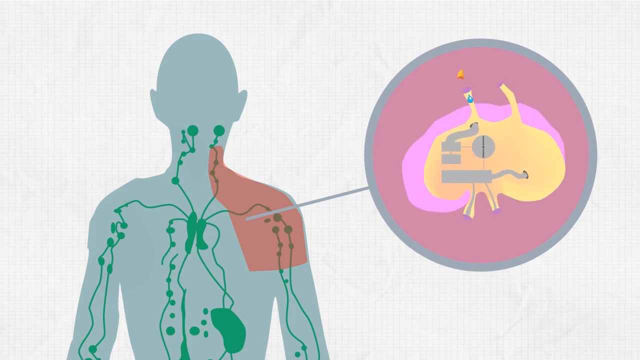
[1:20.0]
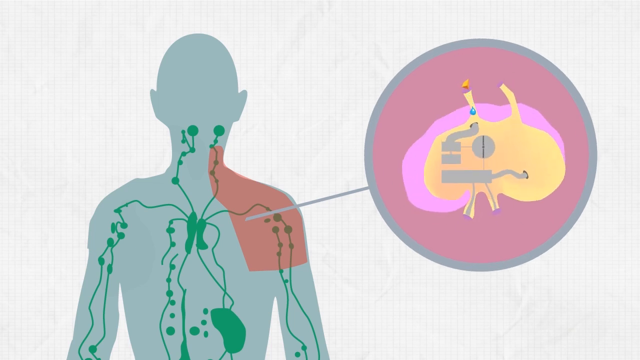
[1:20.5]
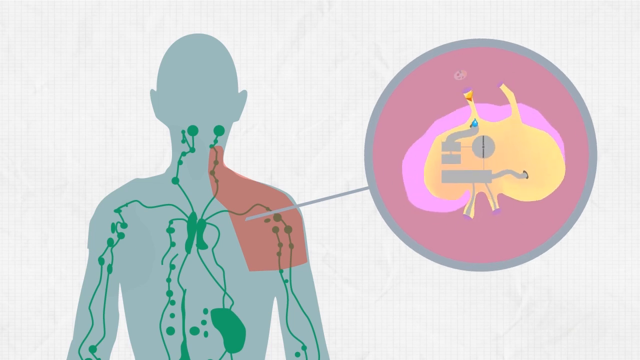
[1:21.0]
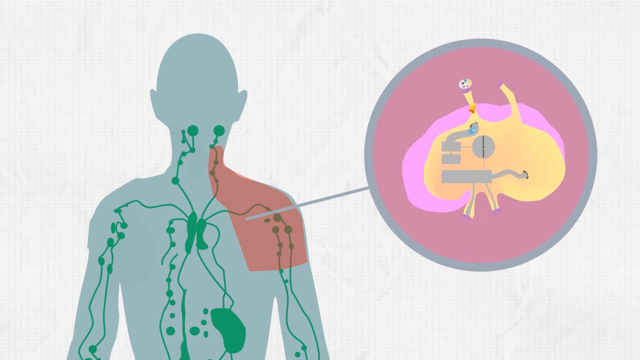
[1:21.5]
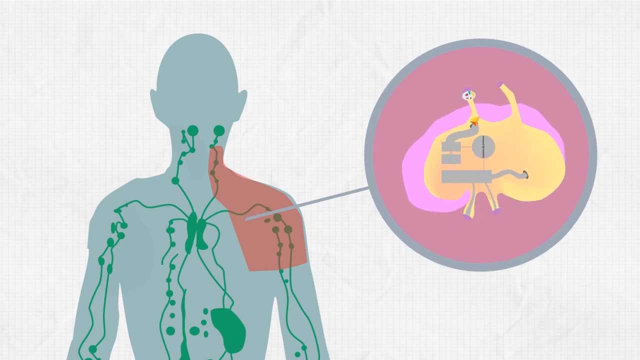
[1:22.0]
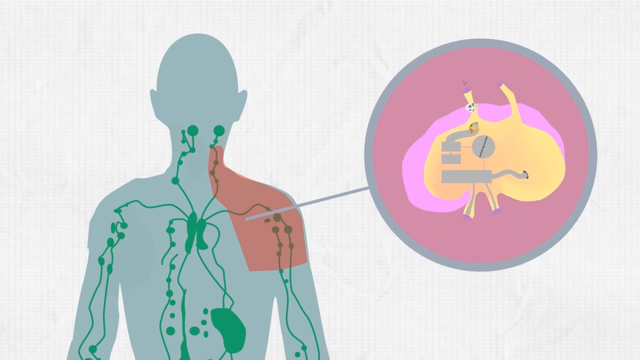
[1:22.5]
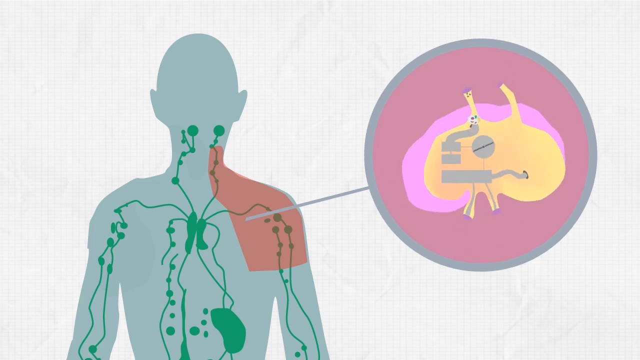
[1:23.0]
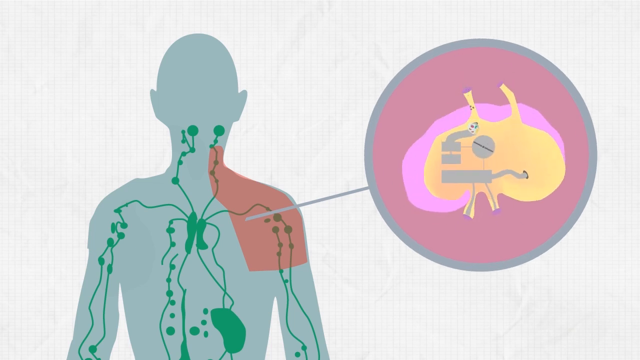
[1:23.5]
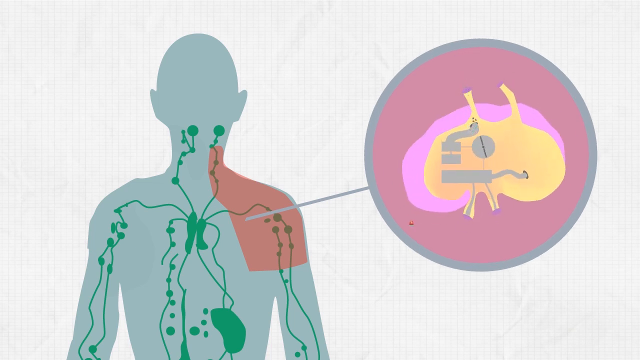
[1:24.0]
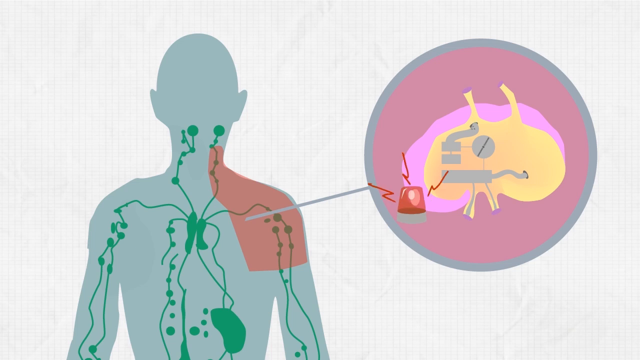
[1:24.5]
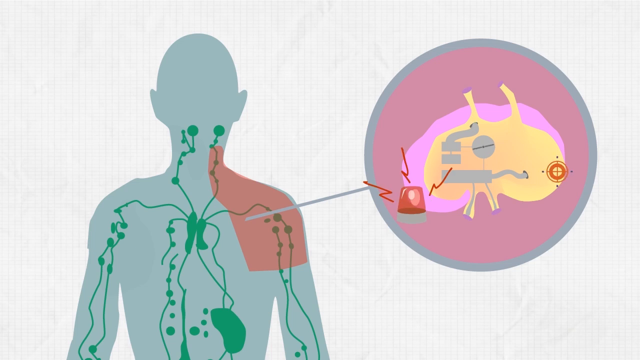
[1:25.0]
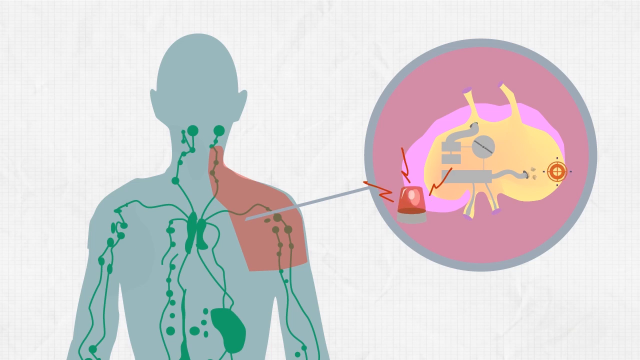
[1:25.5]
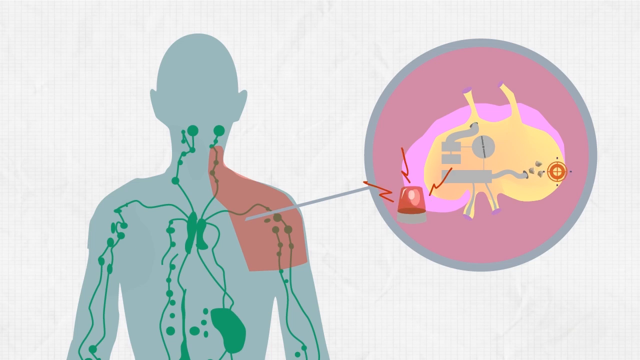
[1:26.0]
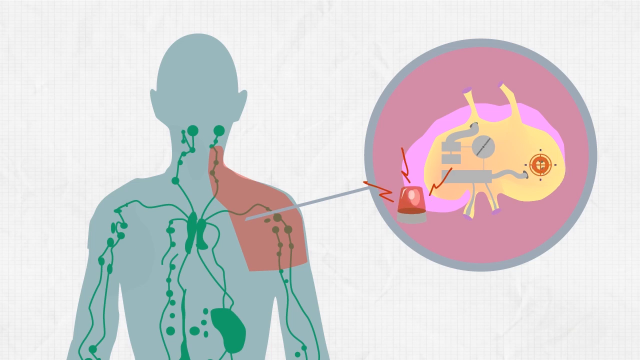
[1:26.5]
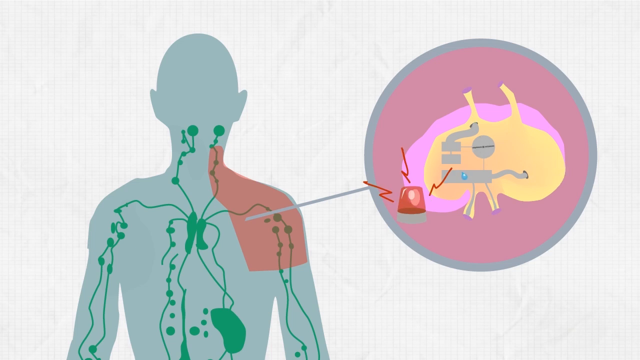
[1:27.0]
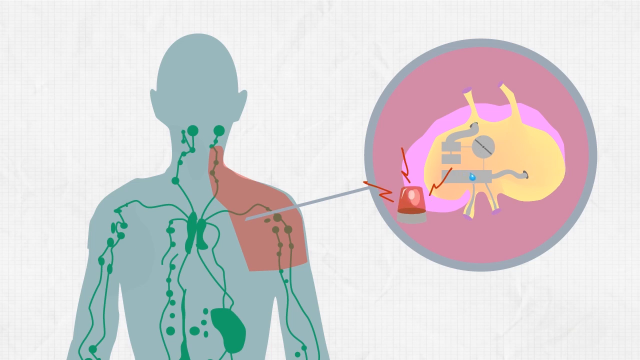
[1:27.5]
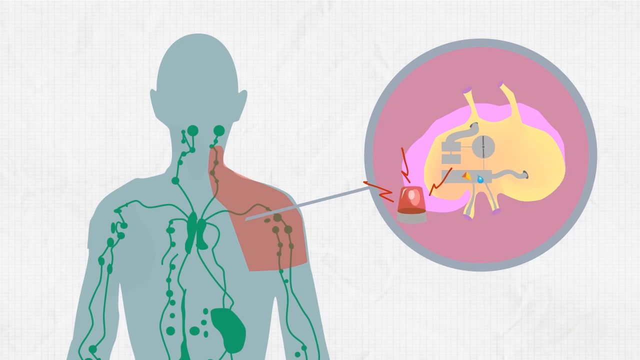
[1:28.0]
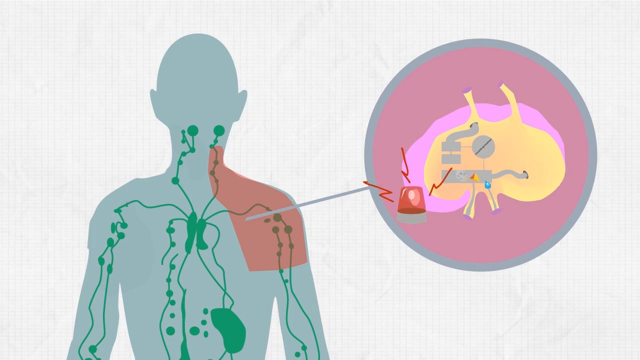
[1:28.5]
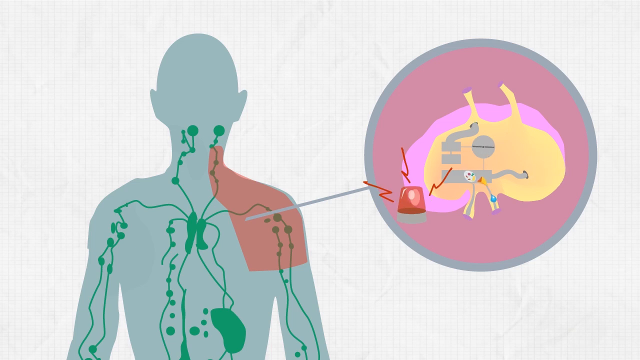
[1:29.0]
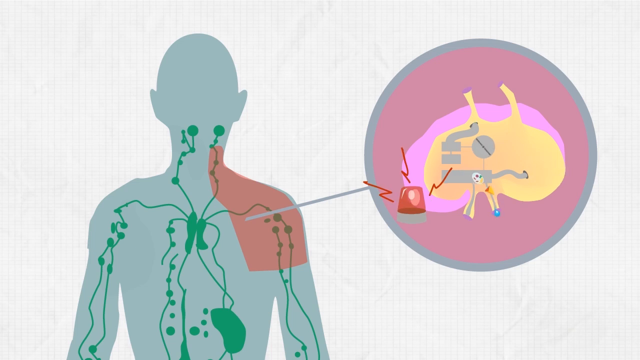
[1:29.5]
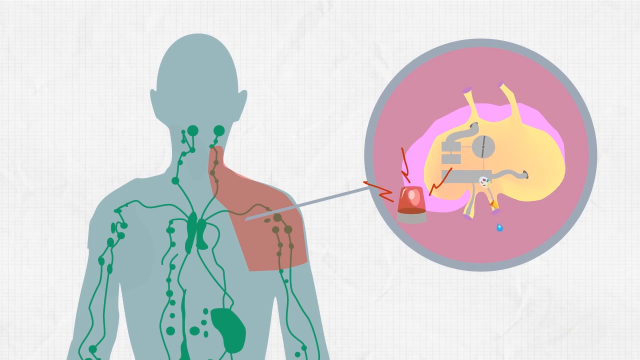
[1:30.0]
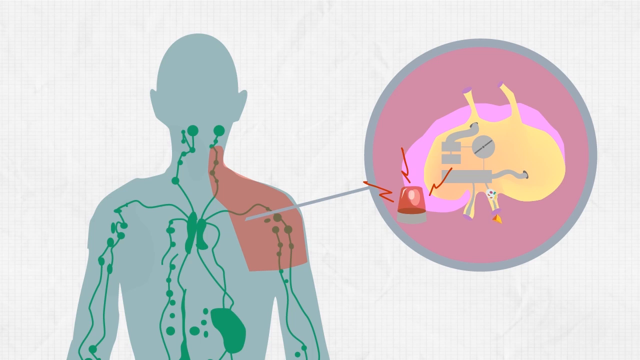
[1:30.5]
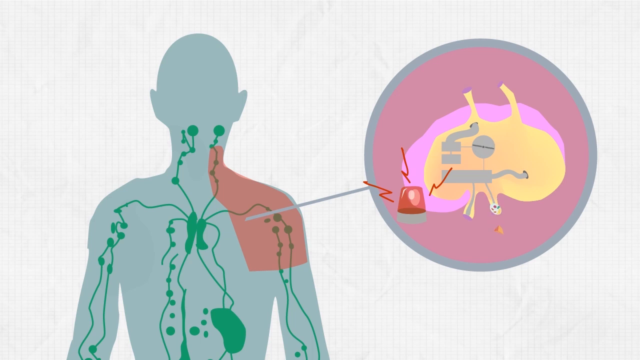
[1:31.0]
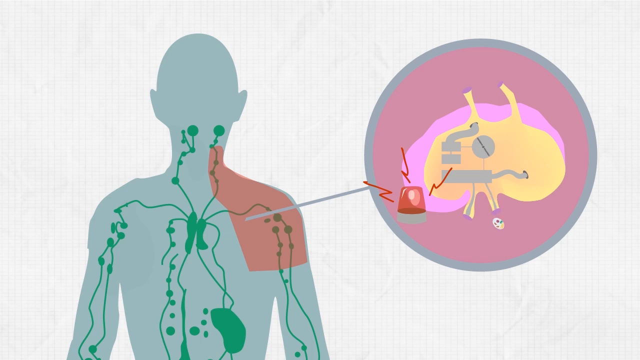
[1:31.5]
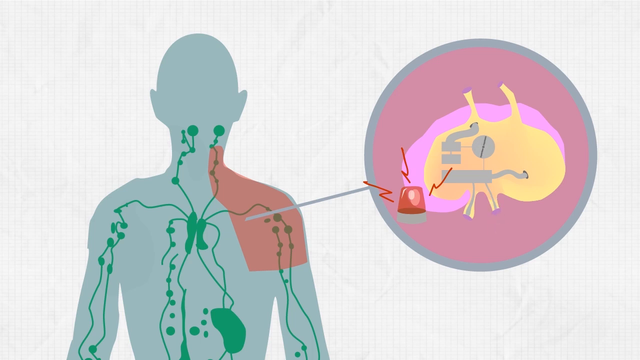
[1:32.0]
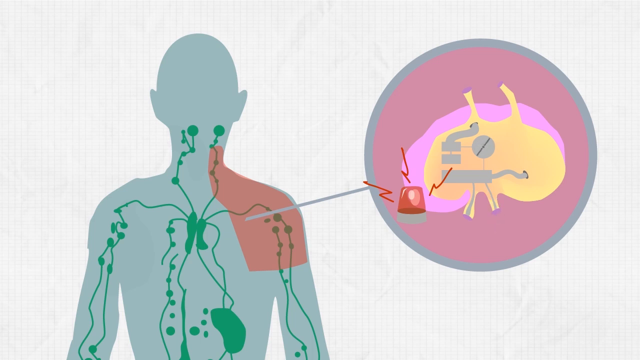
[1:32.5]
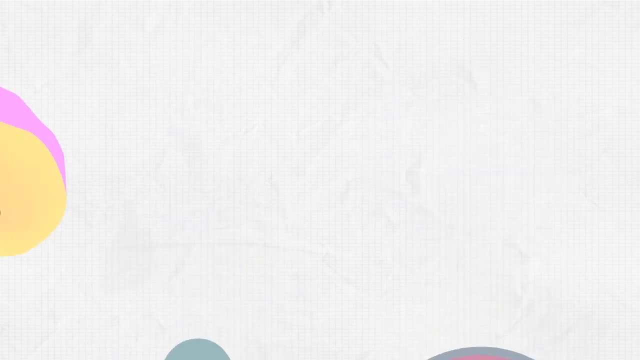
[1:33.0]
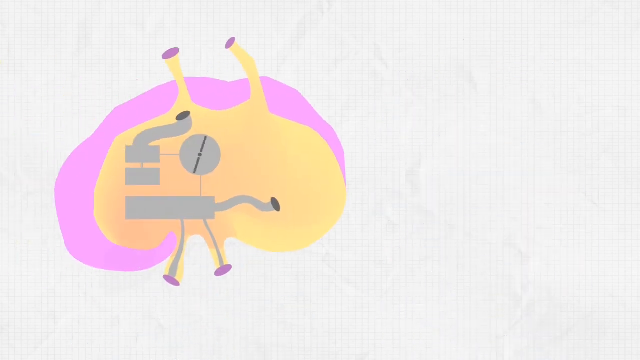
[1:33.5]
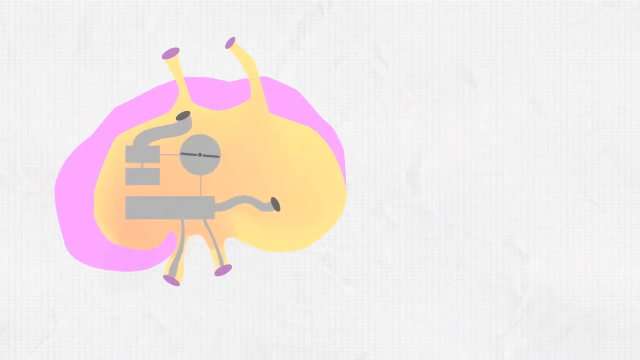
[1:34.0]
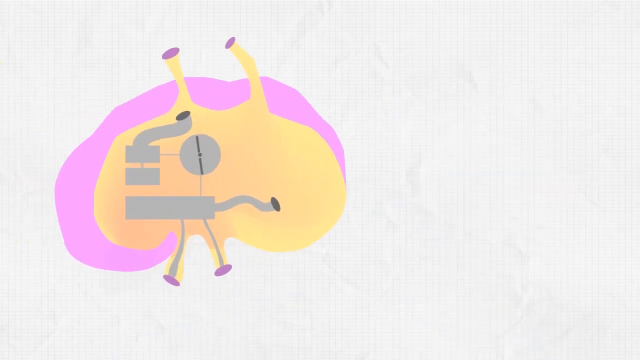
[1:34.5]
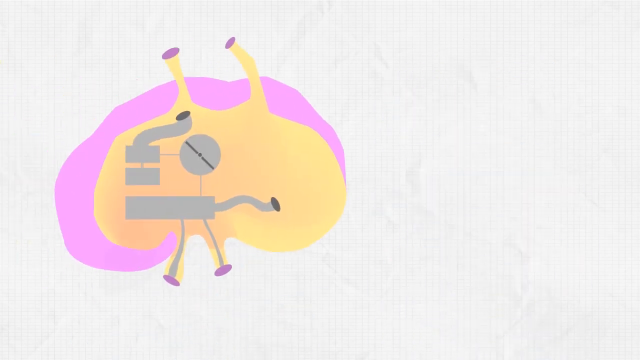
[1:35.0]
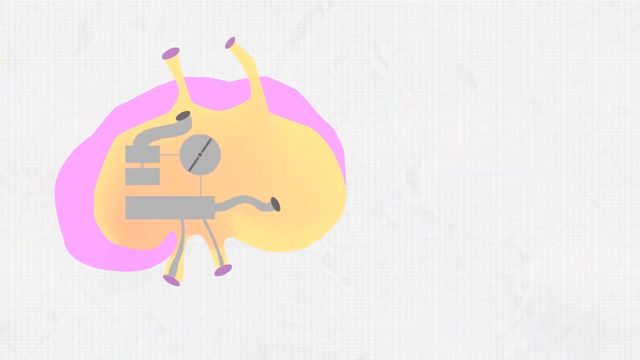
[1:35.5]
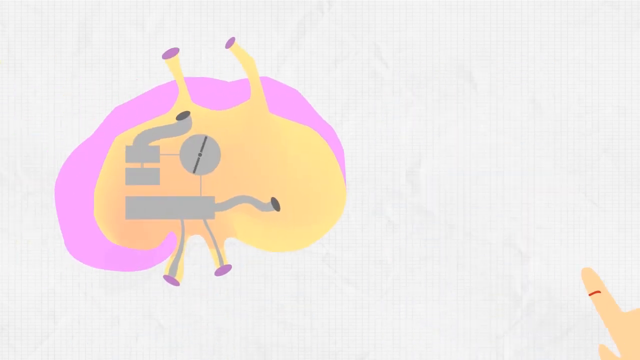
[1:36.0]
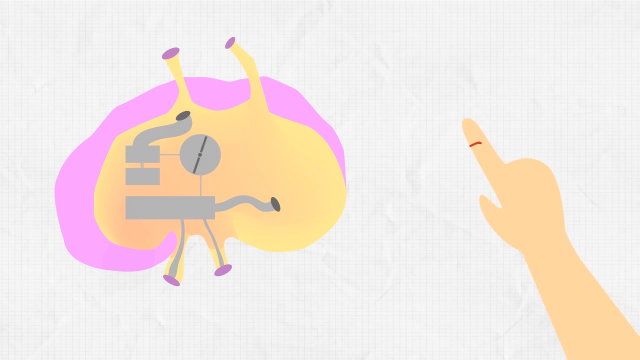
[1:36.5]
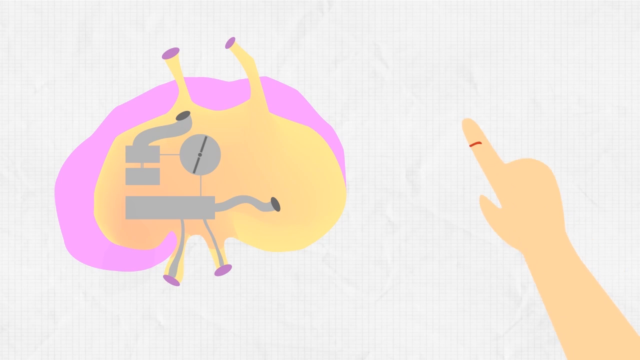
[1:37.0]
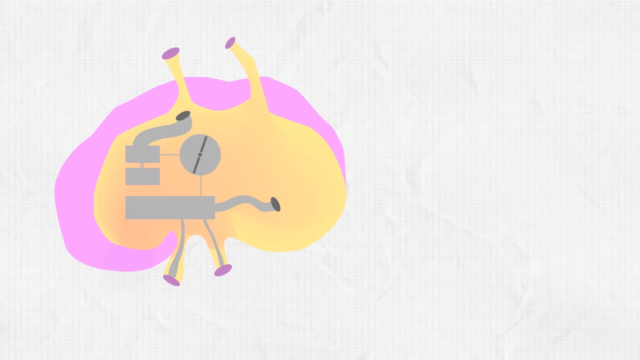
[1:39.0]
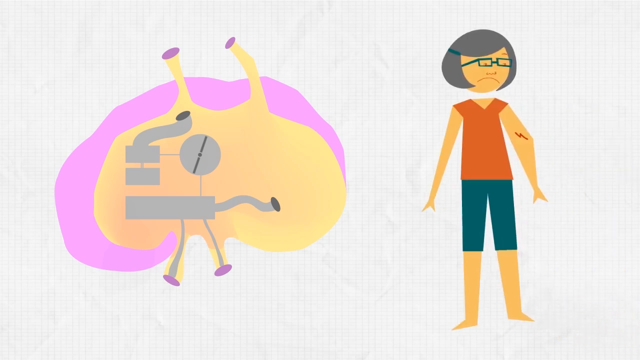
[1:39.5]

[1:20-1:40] Little icons come into the tube at the top, and a red siren suddenly appears with little red lightning marks coming out of it, possibly indicating distress about what is entering the organ. The rotating gray circle is still turning. The earlier icons, the little water, protein, and cells, move through the gray system. The alarm appears, then almost like a little gray pipe coming out of one end with a little exhaust, and a little red radar-like target. That all goes away, and the icons appear to leave the system through the lower tube. A close-up shows the big, splotchy, yellow, kind of stomach-shaped organ, about three quarters outlined in a thick, irregular pink, with two kind of yellow tubes coming from the top and two from the bottom, each kind of pink at the end, plus the rotating gray circle in the middle and other gray rectangles and tubes. The flesh-colored finger comes back up, this time without the veins, showing just the one little red splotch or line. Then the original illustrated woman comes back in from the right, standing and looking sad as she looks down at her left arm, which has a little red gash about halfway down.